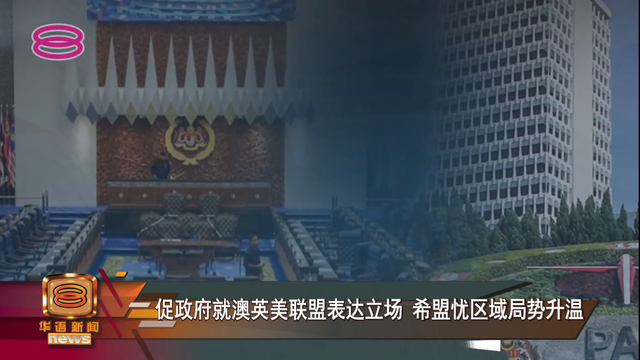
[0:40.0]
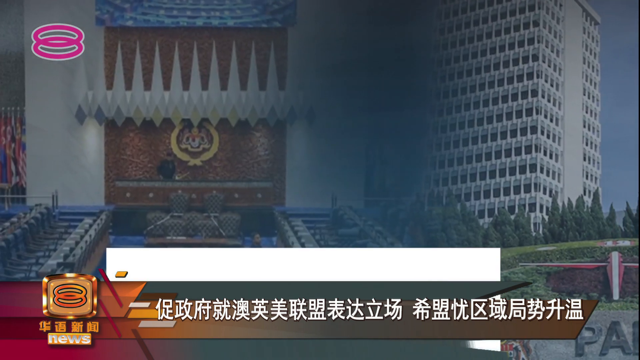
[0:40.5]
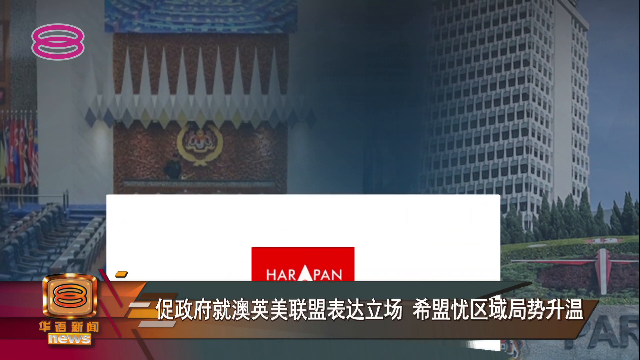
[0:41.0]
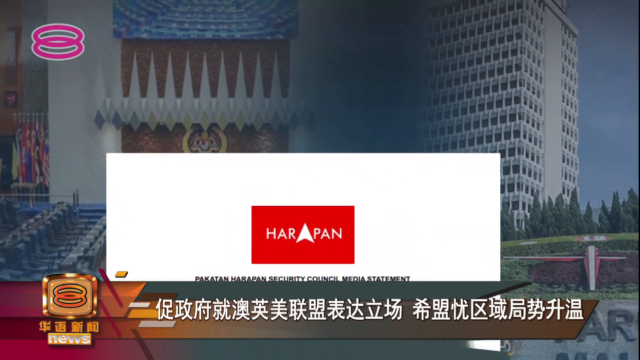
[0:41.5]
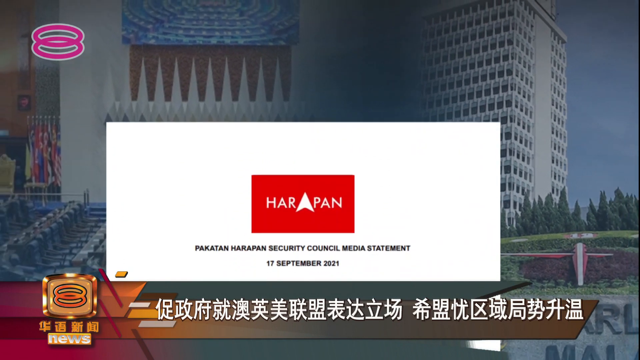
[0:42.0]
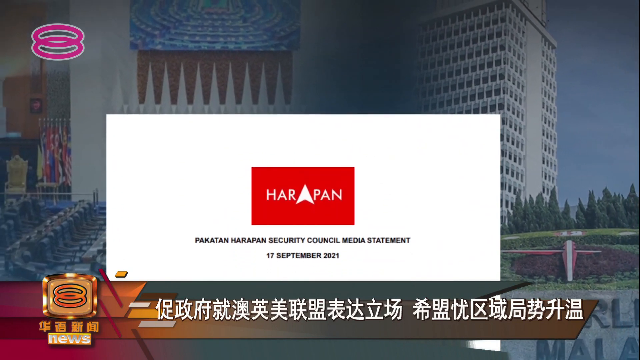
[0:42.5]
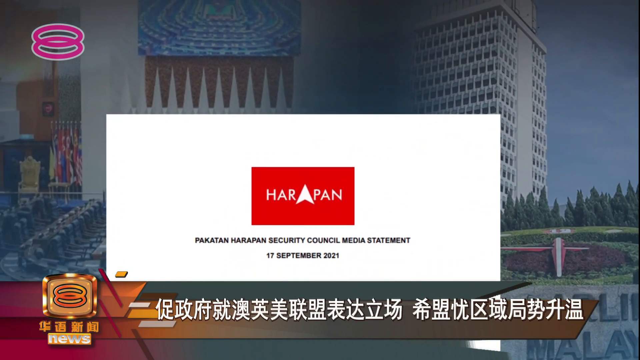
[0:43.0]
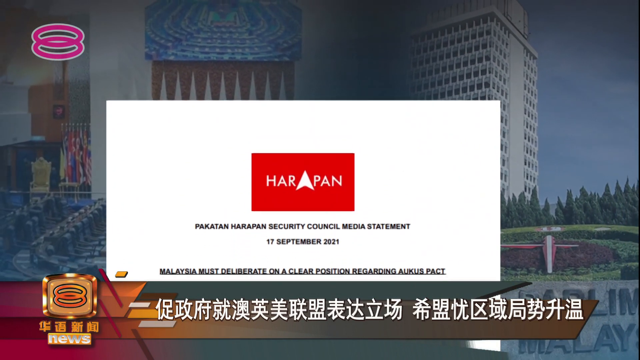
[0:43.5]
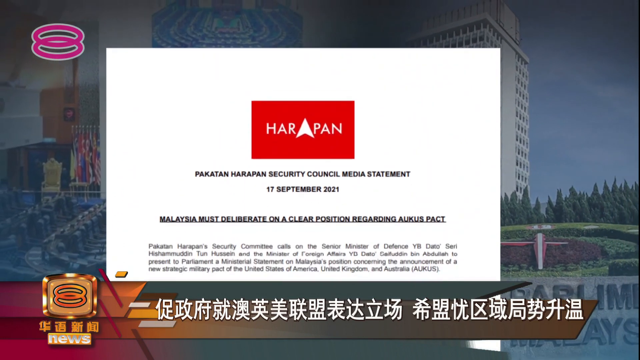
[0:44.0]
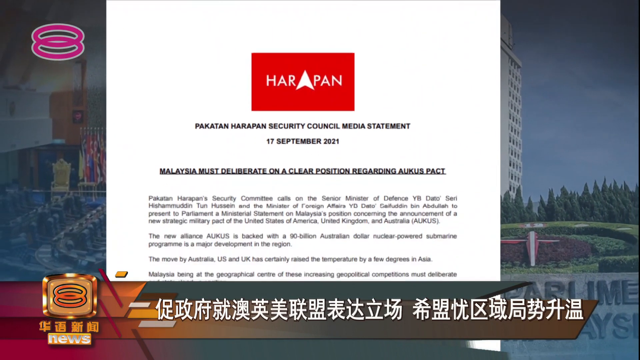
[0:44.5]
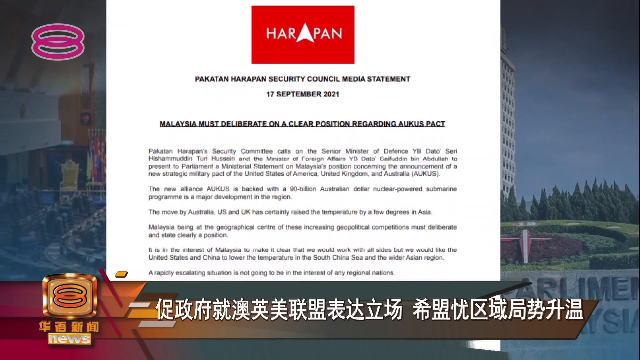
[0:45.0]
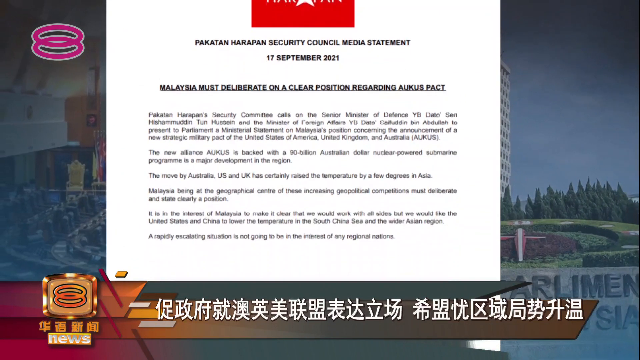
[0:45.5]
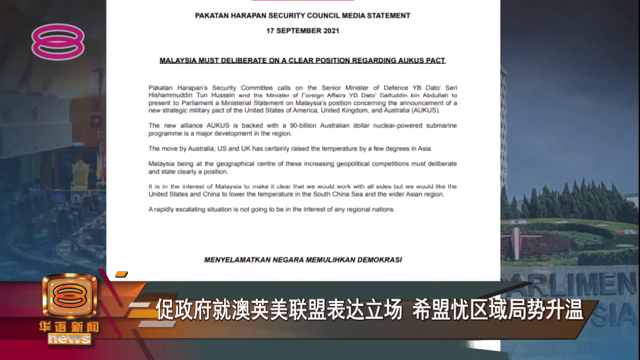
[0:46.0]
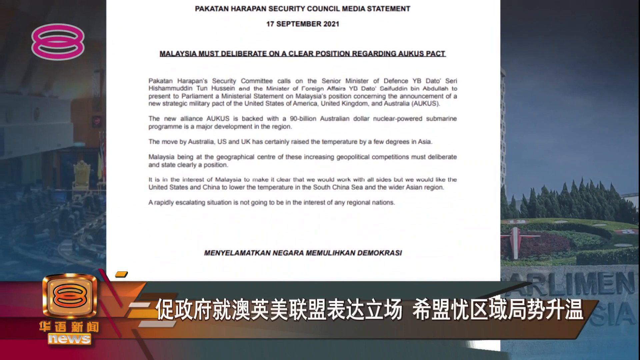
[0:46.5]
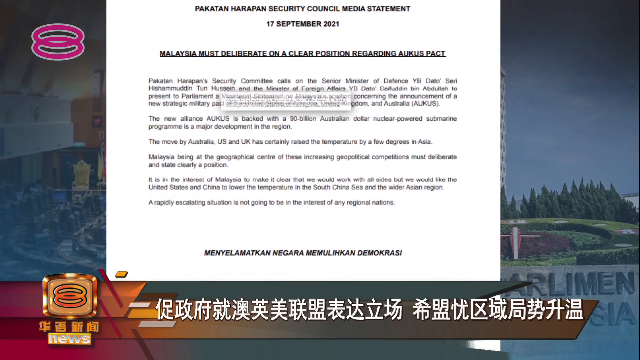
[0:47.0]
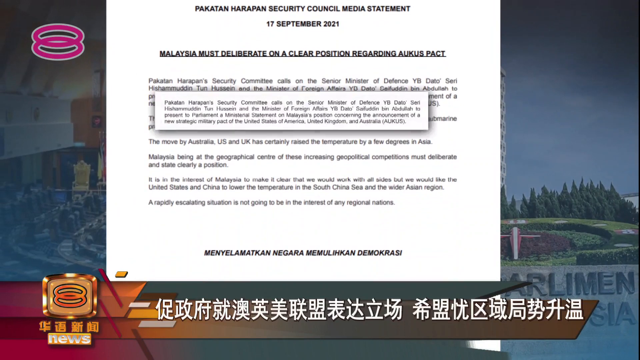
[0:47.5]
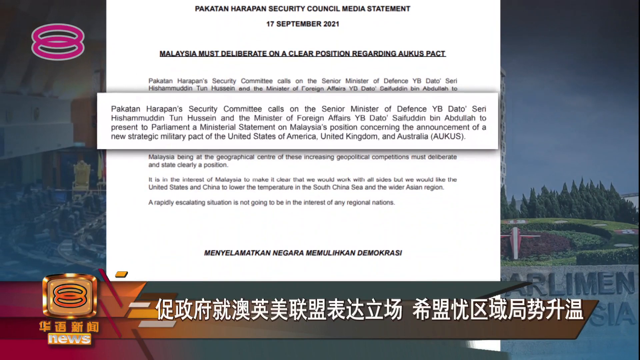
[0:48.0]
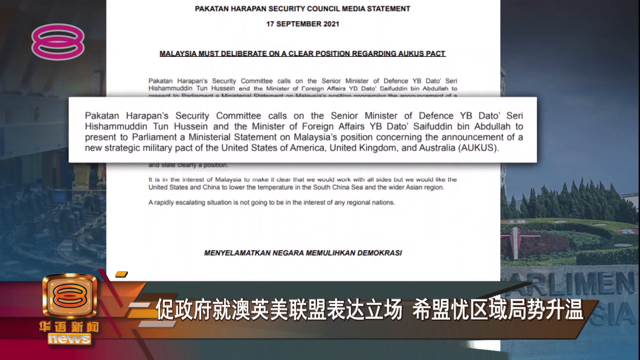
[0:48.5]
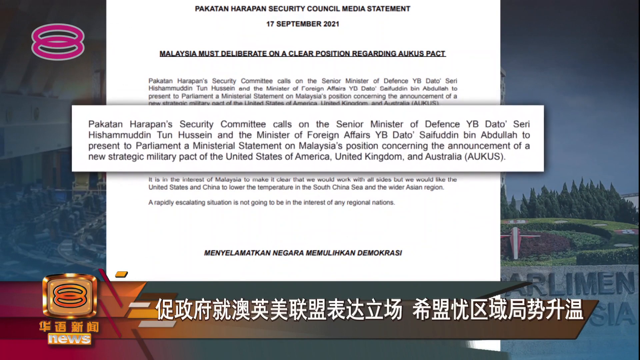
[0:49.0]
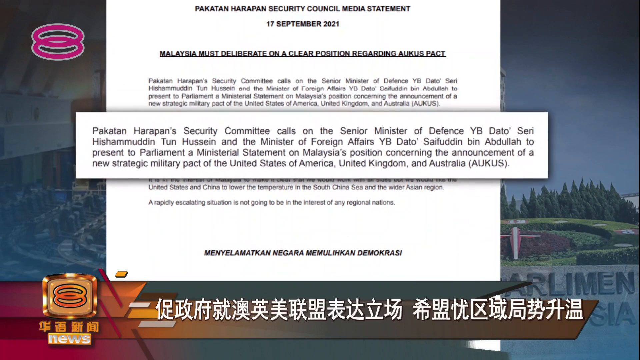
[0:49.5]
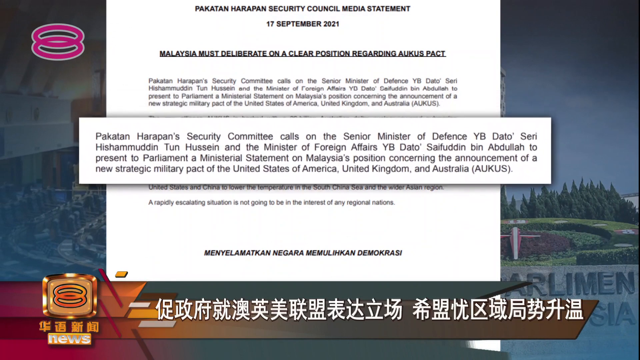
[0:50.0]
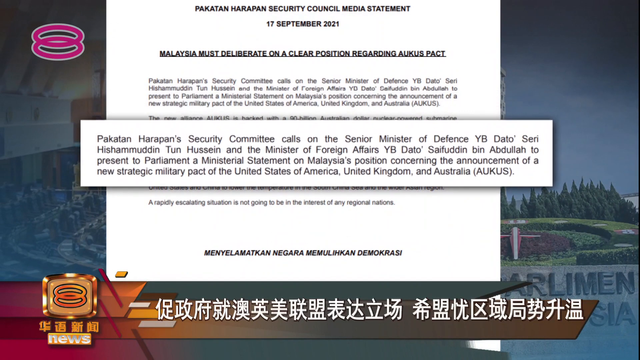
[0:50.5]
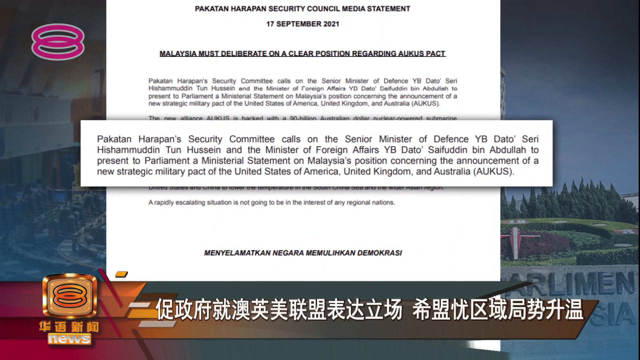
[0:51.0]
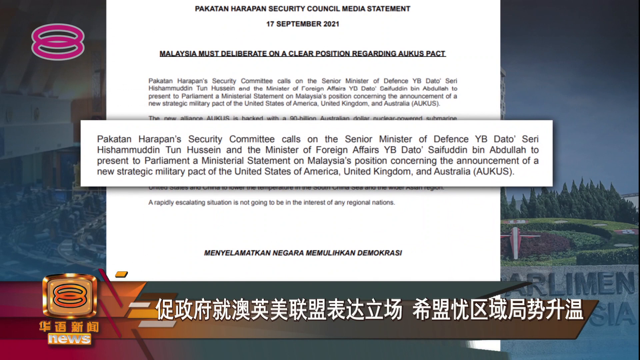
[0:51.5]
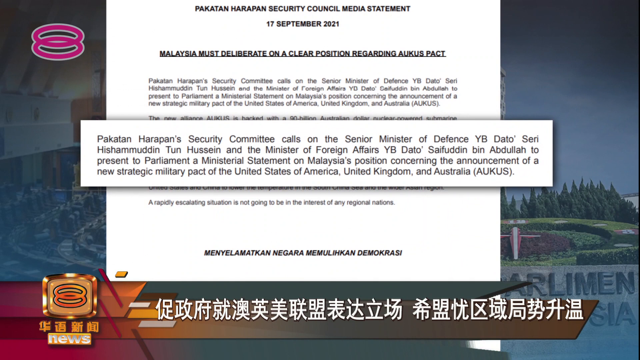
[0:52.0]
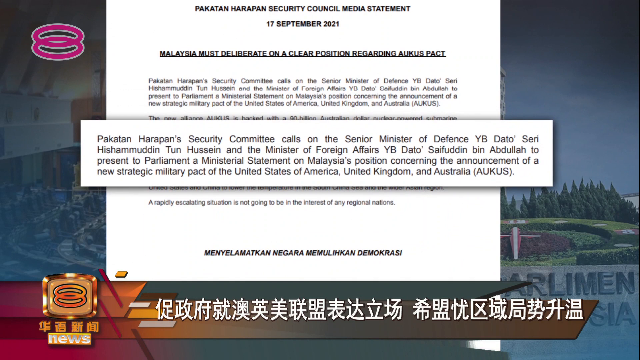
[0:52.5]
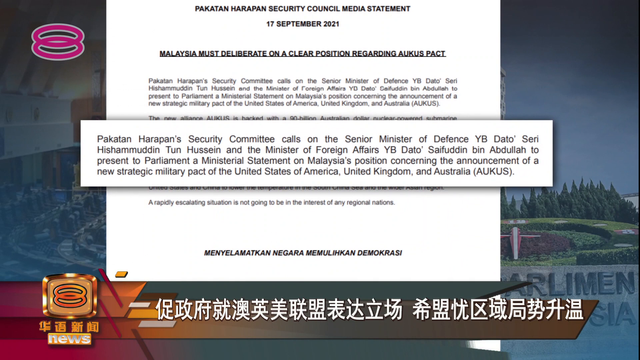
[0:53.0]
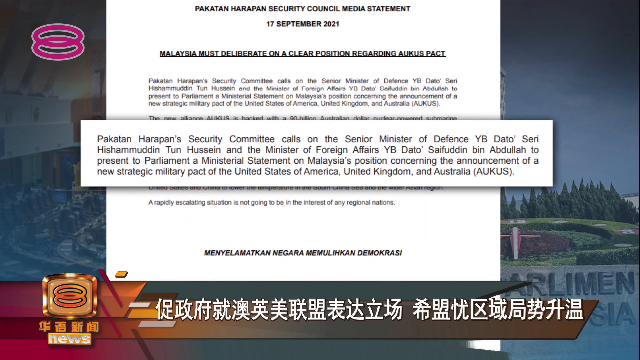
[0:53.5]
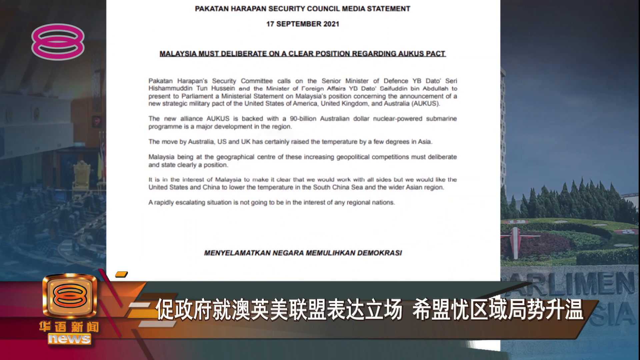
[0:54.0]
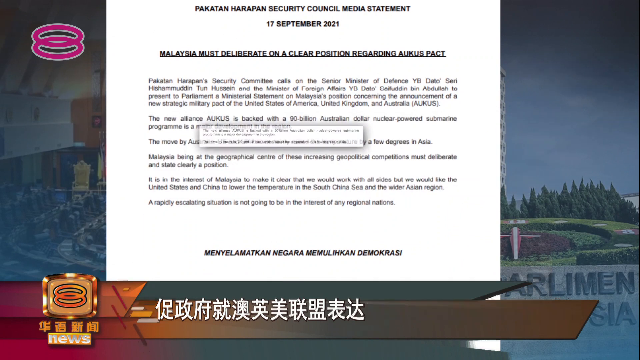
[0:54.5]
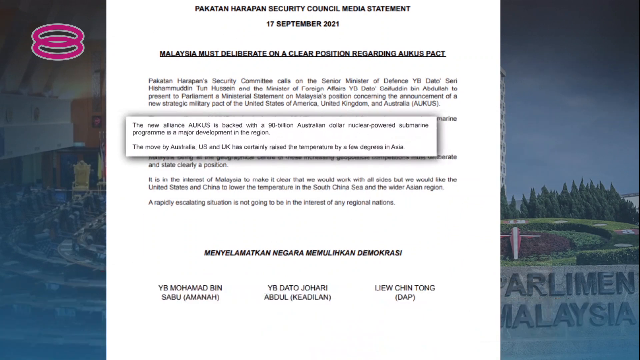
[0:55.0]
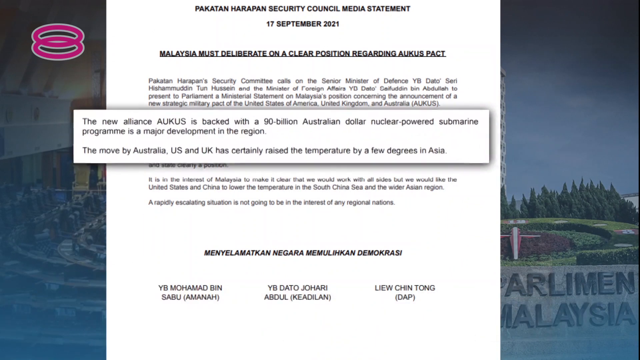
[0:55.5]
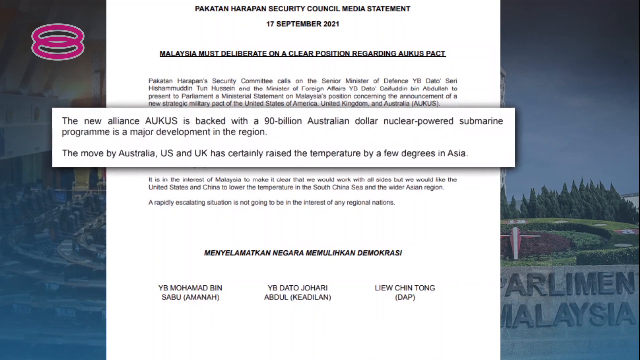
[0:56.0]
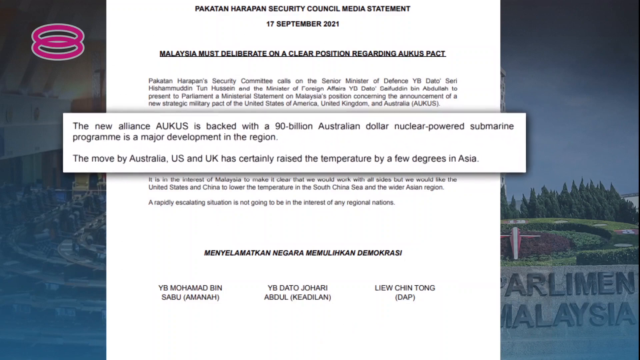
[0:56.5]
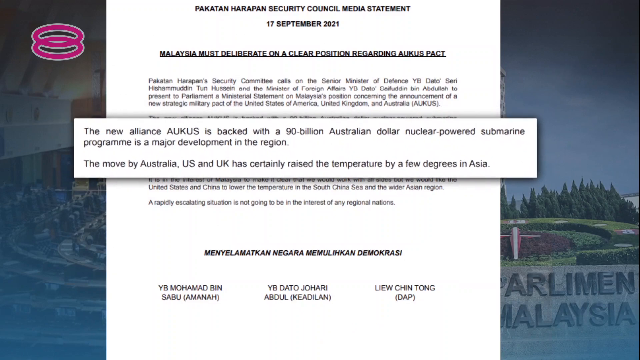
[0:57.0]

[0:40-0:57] The news broadcast shows text on the screen about a security committee call on the Senior Minister of Defense, YB Dato. The text refers to a parliament inquiry into something concerning Malaysia and a position on the announcement of a new strategic military pact between the United States of America, the United Kingdom, and Australia, an alliance named AUKUS.